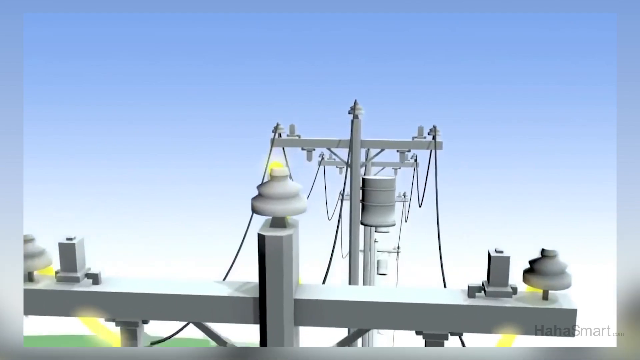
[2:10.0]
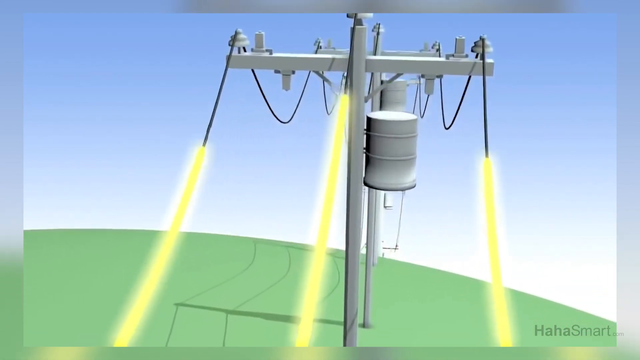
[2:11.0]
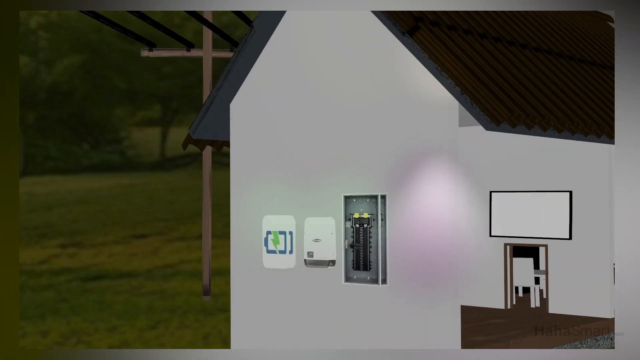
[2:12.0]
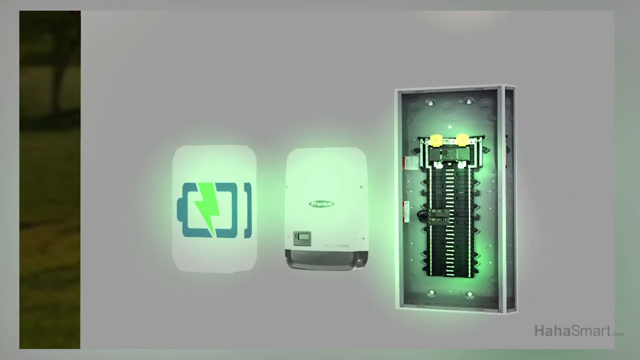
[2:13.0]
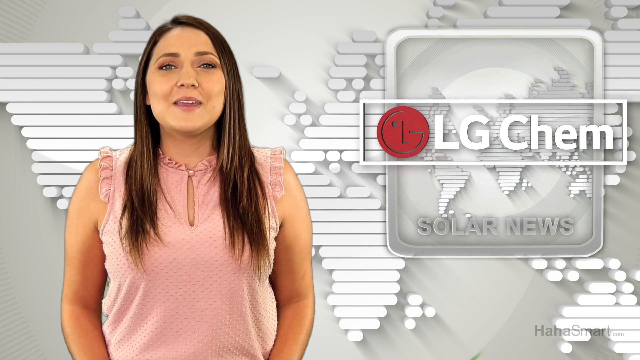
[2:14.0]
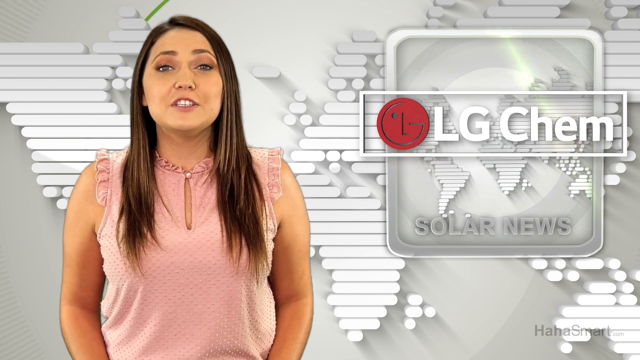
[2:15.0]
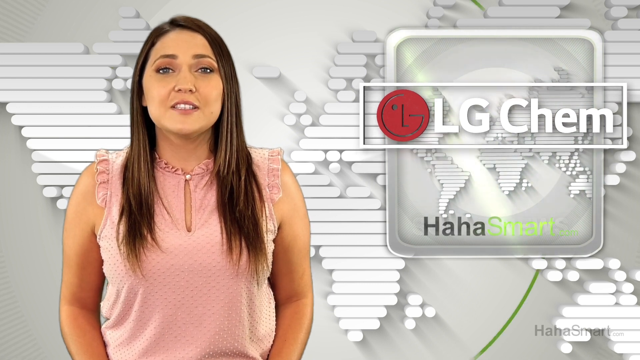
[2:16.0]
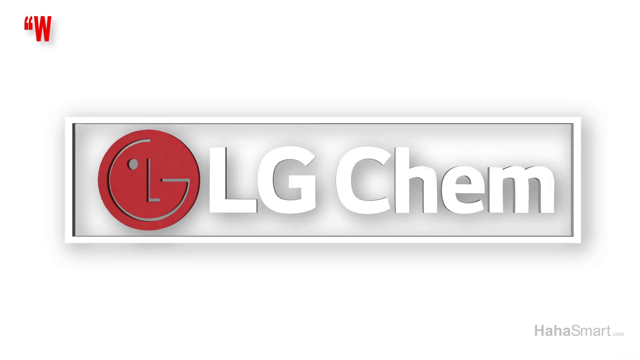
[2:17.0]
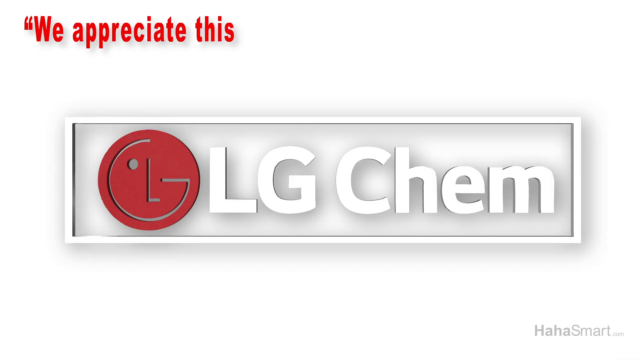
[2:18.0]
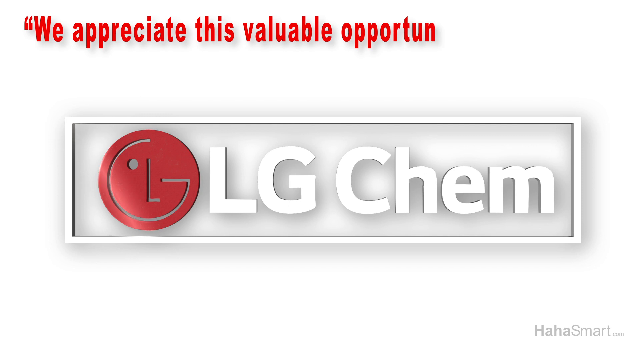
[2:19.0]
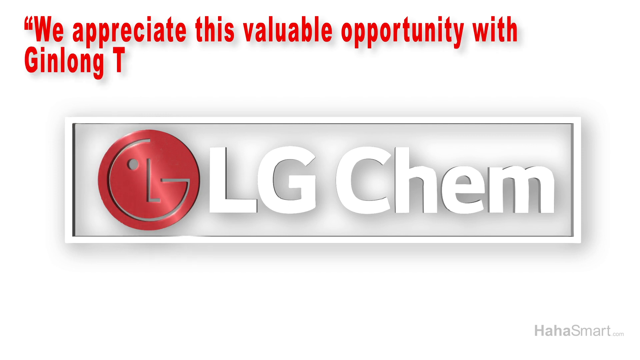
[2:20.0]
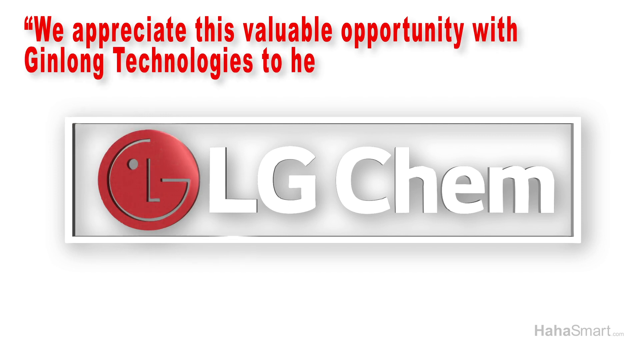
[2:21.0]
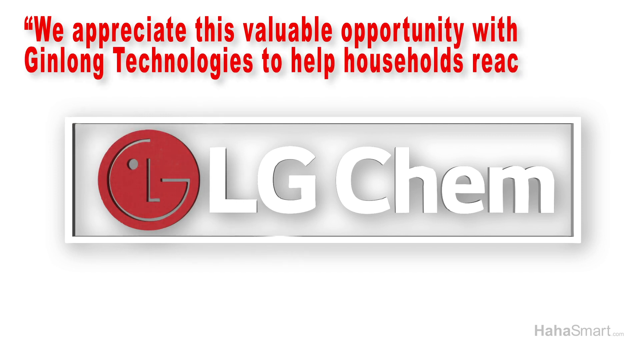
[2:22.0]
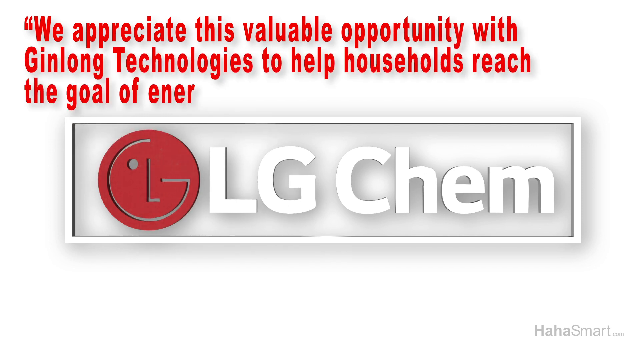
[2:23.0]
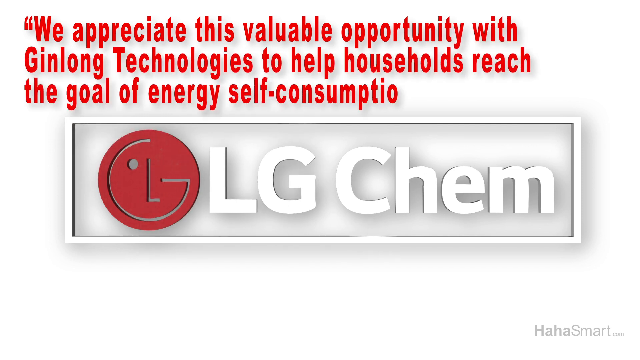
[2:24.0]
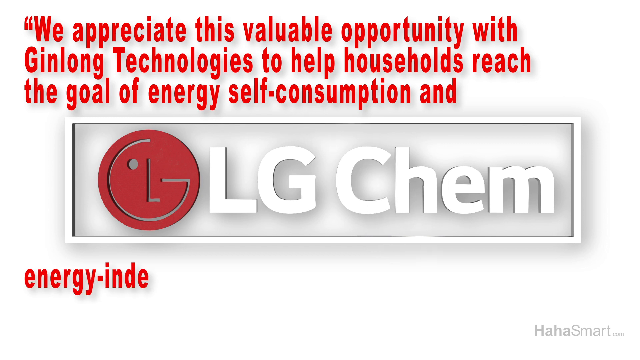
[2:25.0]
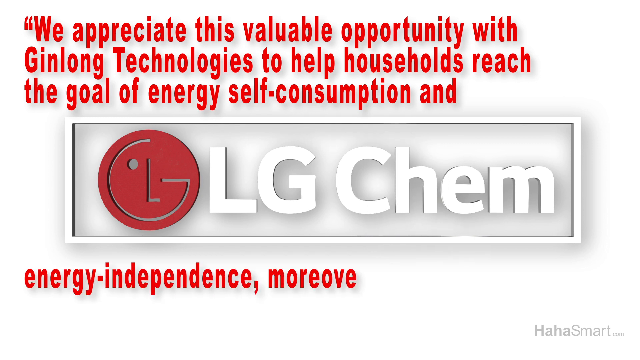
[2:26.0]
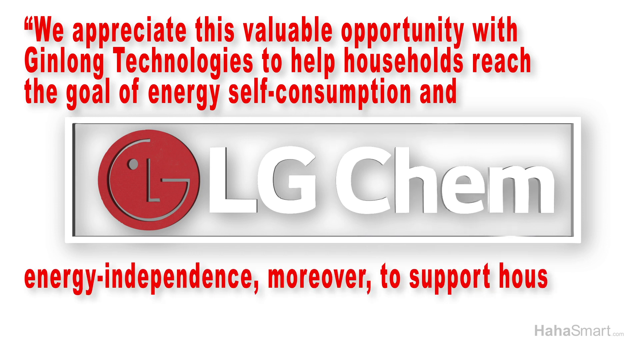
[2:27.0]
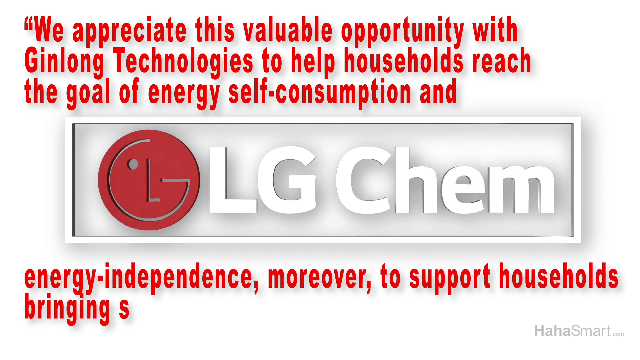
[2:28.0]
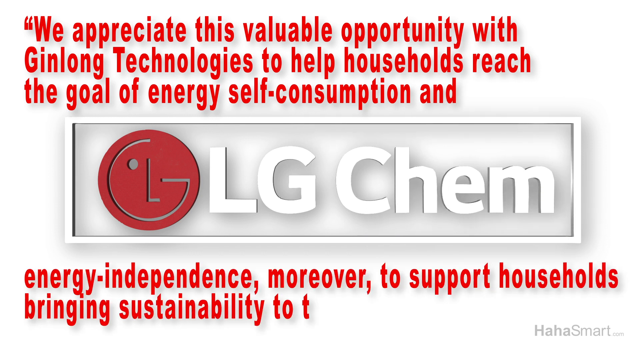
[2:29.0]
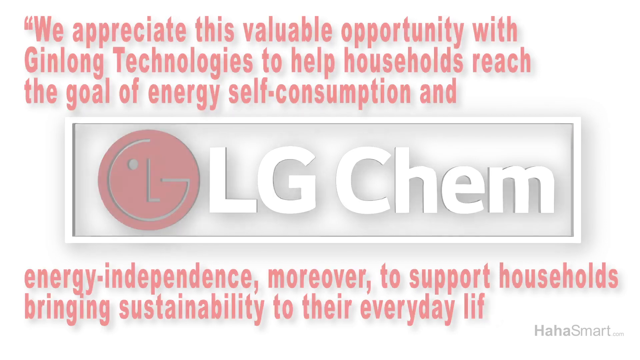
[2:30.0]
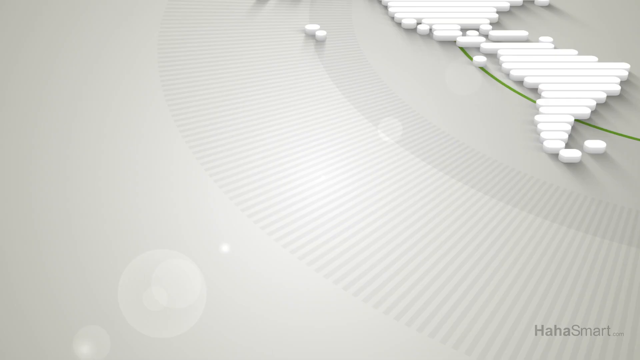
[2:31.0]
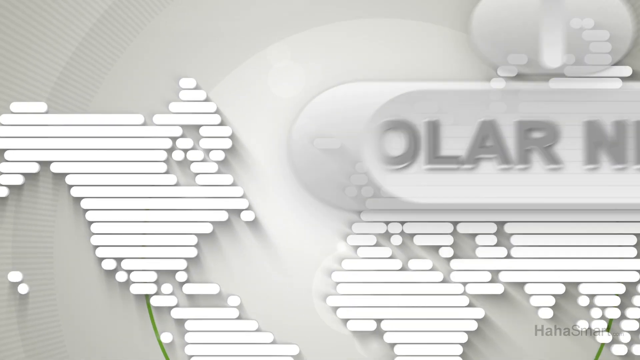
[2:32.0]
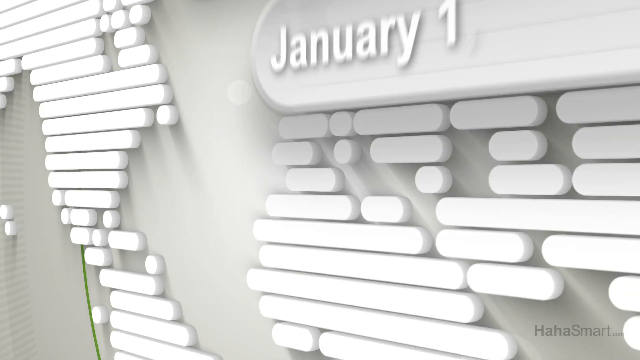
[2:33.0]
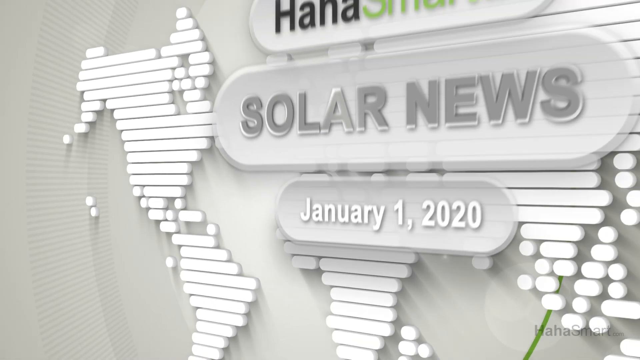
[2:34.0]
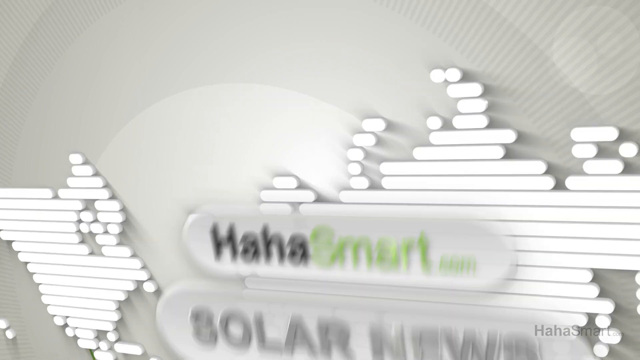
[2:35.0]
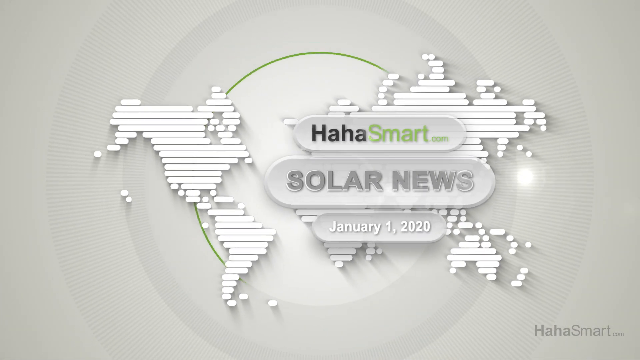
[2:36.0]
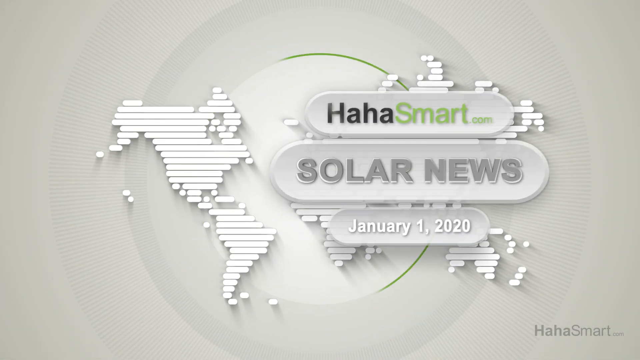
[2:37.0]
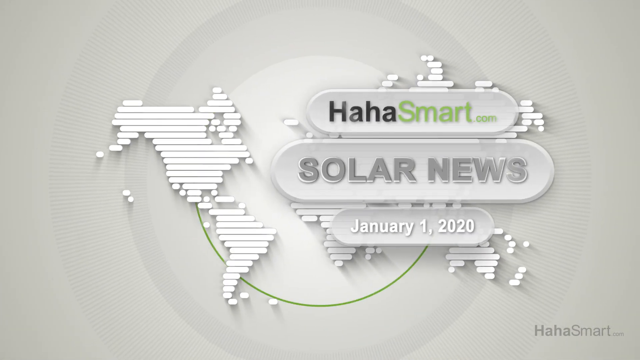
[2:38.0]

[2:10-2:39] An aerial view shows a digital or computerized image of electricity wires on gray poles: three rows of black wires, with yellow energy-like light channeled through the wires, which the view follows. The scene transitions to a digital image of a house, then to a side view of the house showing a solar panel box. Back with Jessica, the red LG logo appears with white letters reading "LG Chem" next to it, all in a rectangular white box. A new screen shows the same LG Chem logo with its red circle. At the top, text comes in from left to right one letter at a time: "We appreciate this valuable opportunity with Ginlong Technologies to help households reach the goal of energy self-consumption and", and below the white box it continues: "energy-independence, moreover, to support households bringing stability to their everyday life". The text is all red, as if being typed in real time. The video then transitions to the newsroom transition screen of white horizontal lines forming the image of the world.